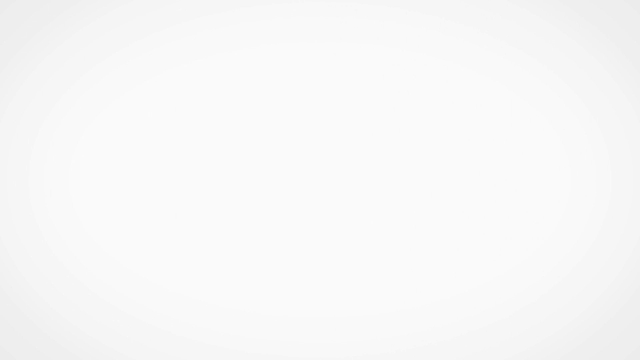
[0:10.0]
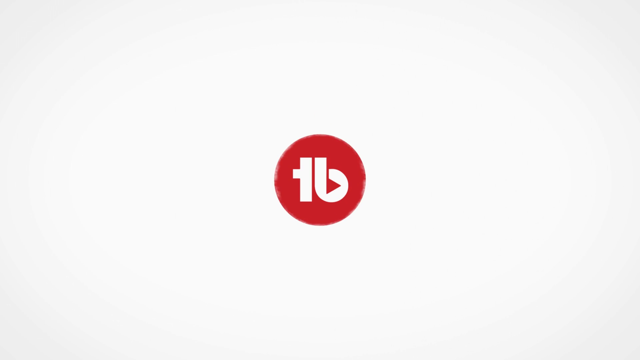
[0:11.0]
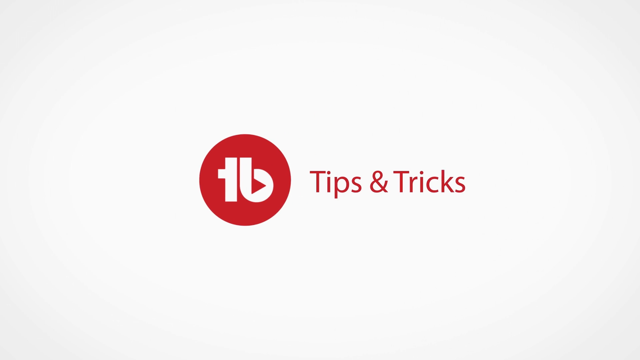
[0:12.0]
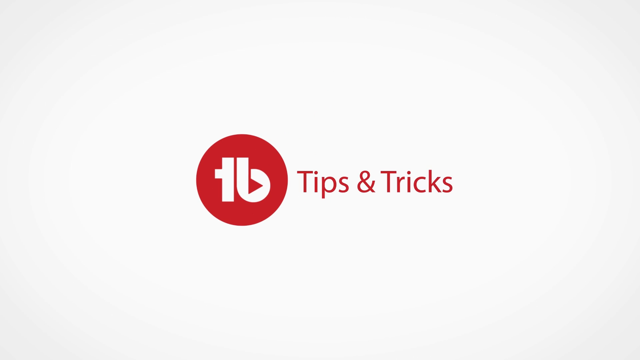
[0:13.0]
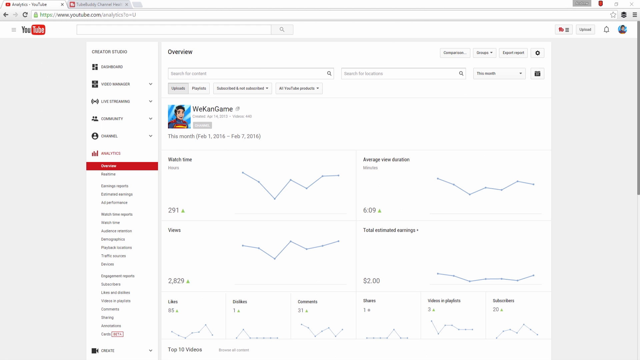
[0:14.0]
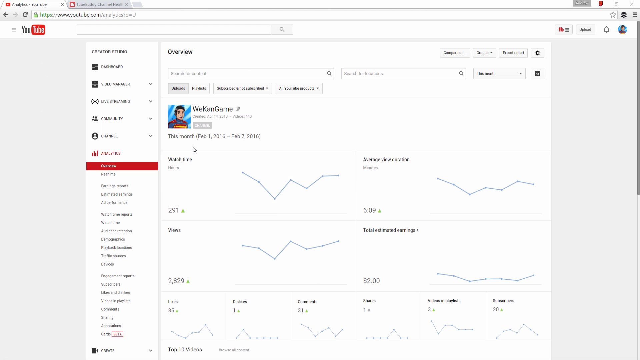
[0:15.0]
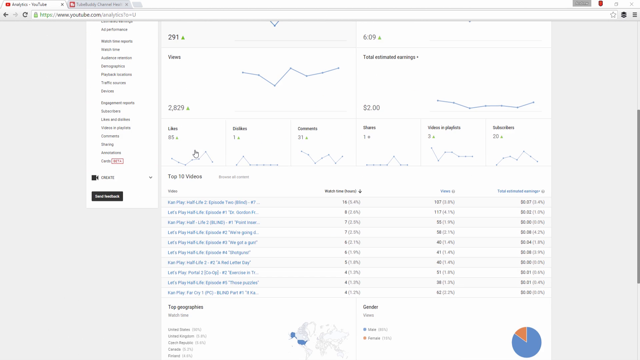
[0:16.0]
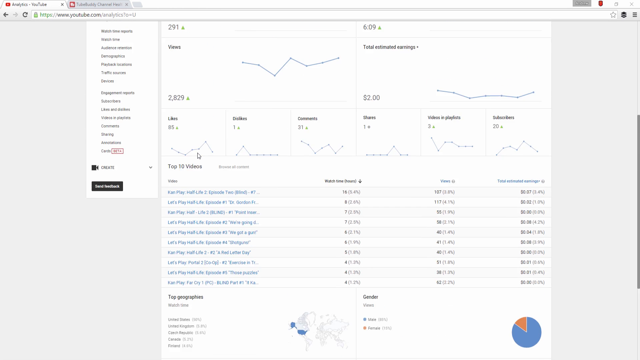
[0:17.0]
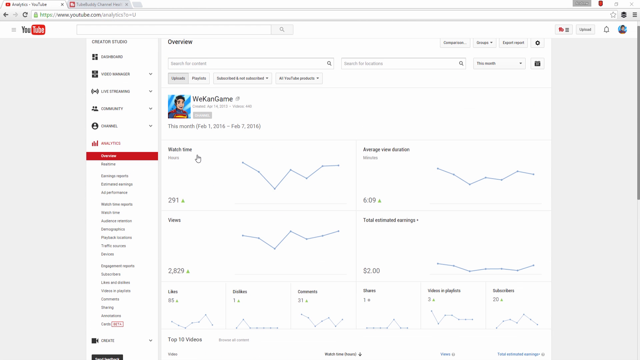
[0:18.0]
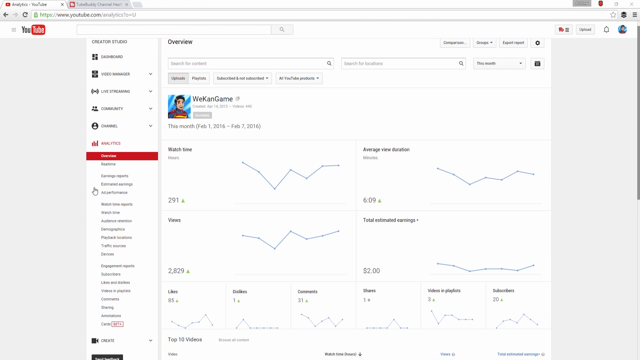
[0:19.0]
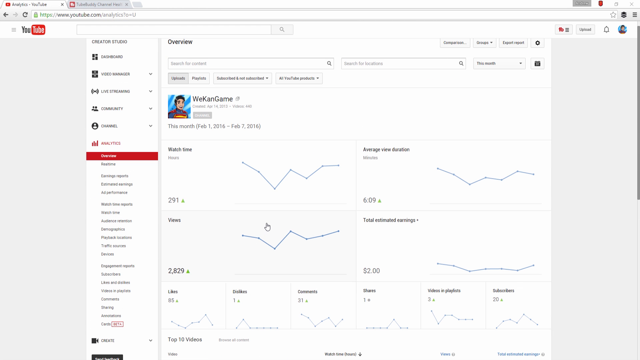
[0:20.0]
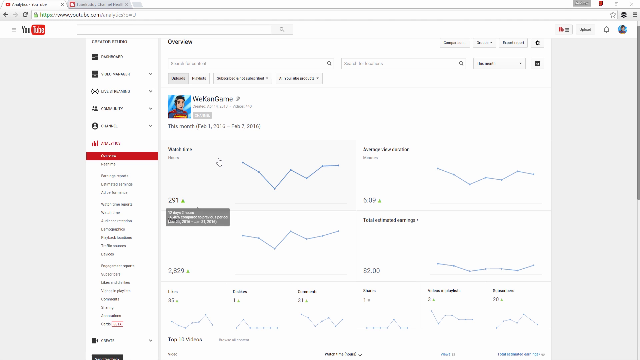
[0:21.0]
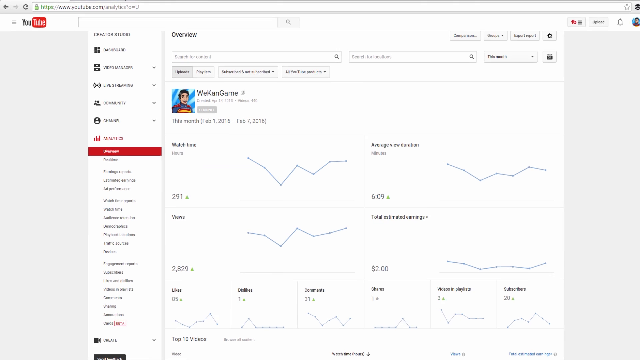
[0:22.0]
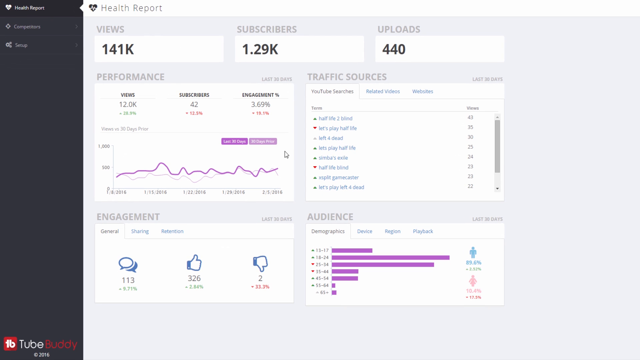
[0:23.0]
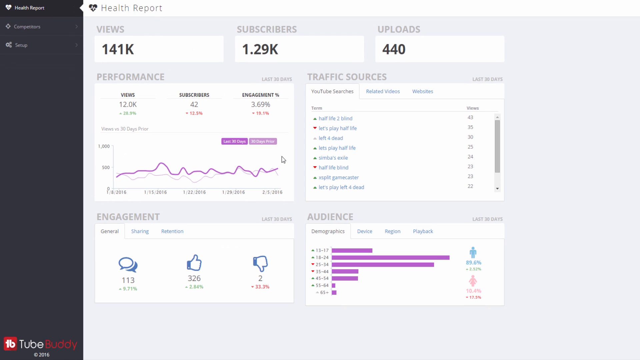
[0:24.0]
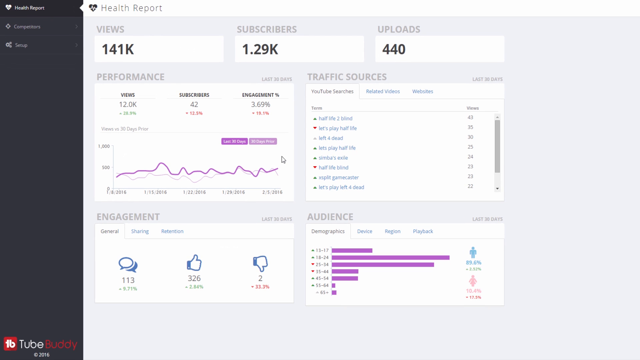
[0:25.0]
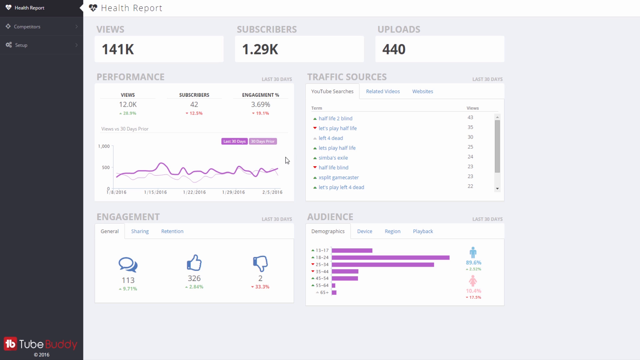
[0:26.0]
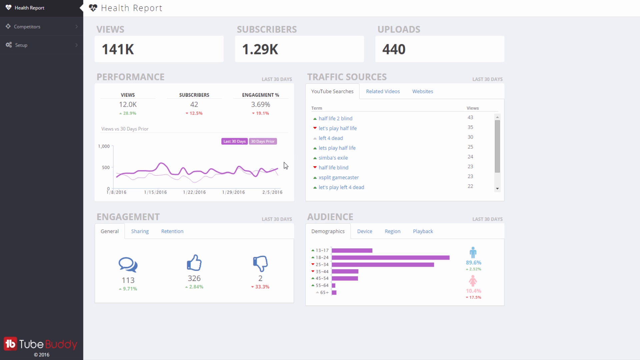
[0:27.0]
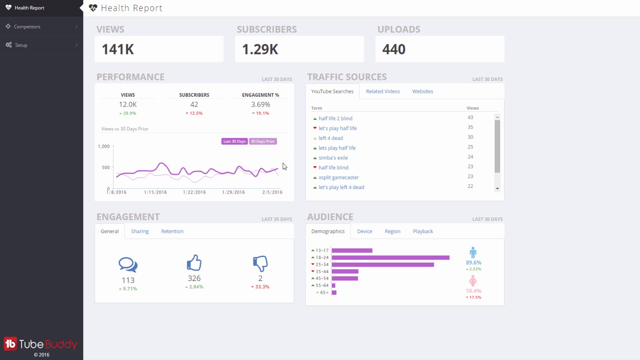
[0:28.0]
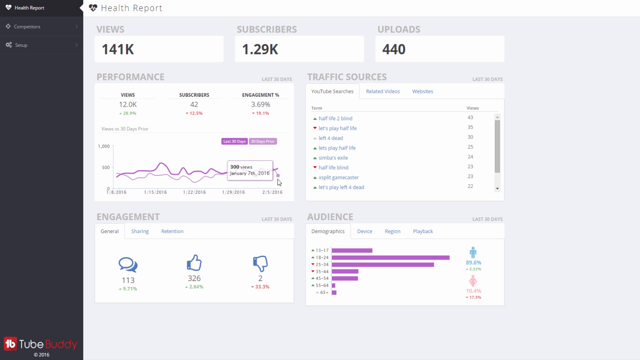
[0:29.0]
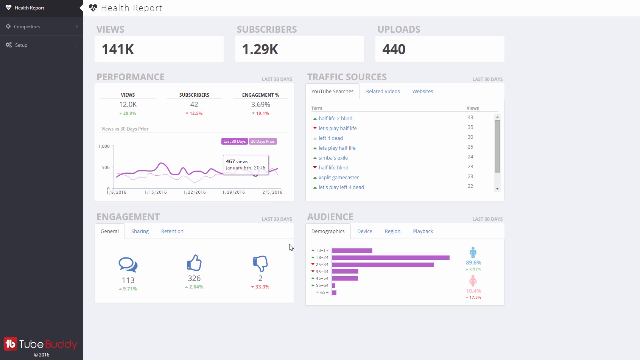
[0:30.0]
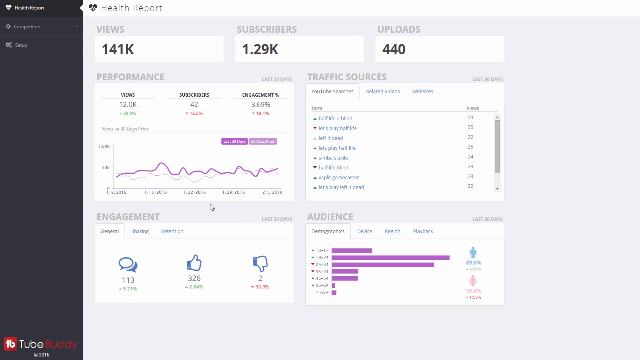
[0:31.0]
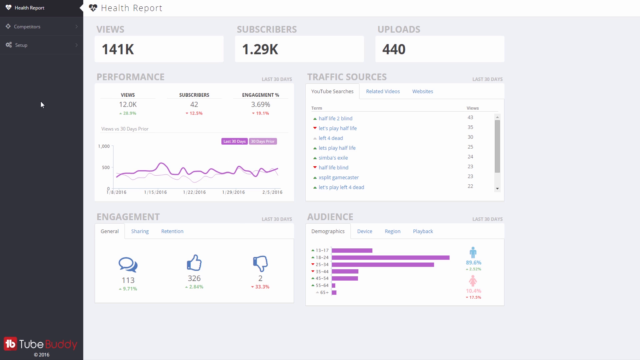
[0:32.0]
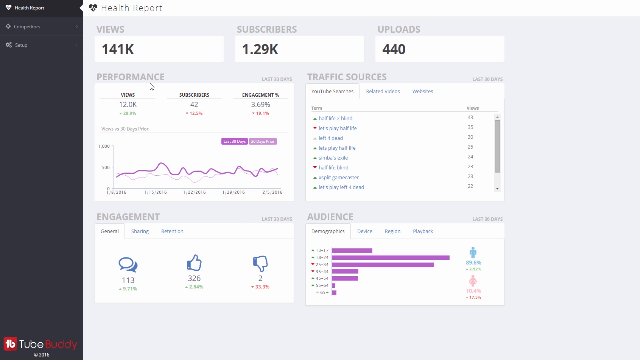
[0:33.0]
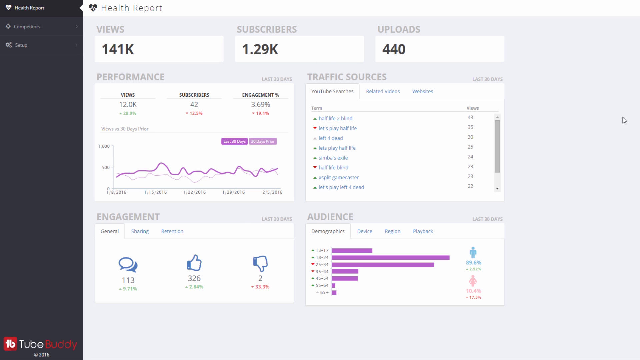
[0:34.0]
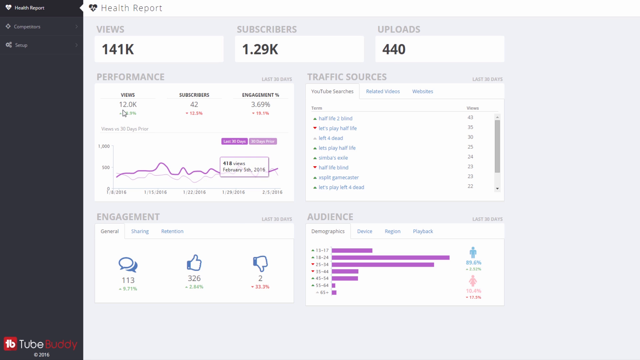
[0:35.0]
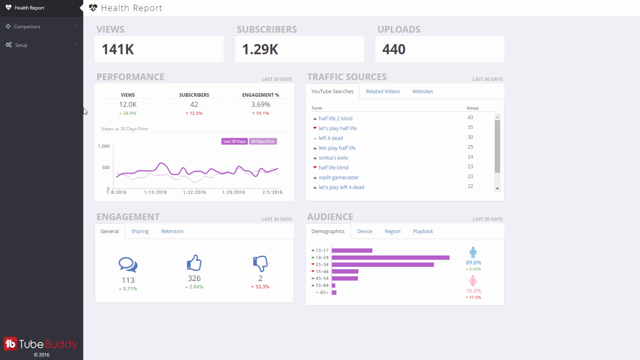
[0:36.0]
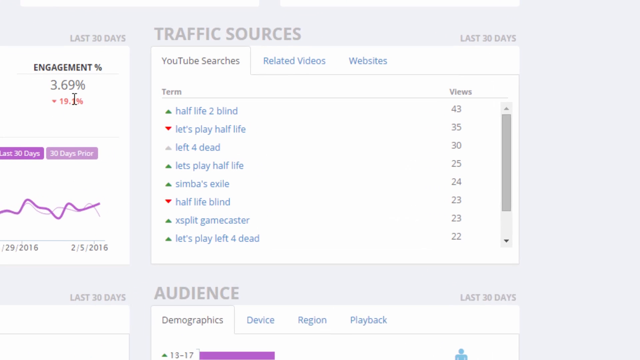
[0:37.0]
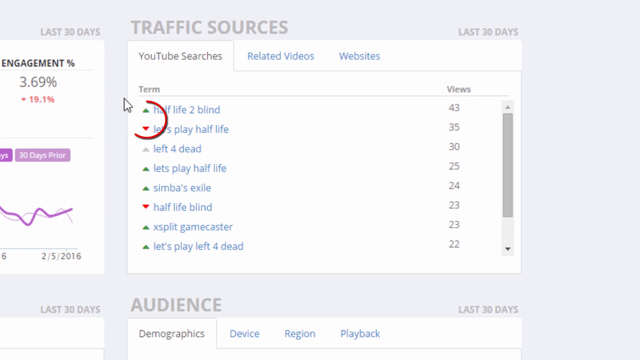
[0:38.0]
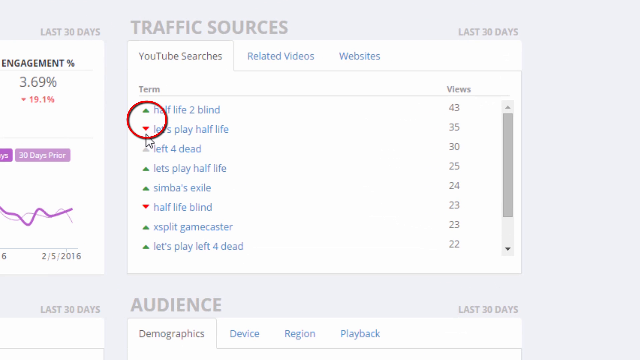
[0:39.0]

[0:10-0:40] A red circular logo with two letters inside drops down, and the words "tips and tricks" come out on a white background. The video then cuts to a YouTube page showing the settings and account information of a YouTube account. The person navigates the account; the account name is "WeCanGame" and its picture shows somebody with black hair. On the analytics page, the text reads "watch time", "average view duration", "views" and "total estimated earnings". The person scrolls down the page, then clicks over to another website in another tab that says "health report". The health report shows 141,000 views, 1.29 thousand subscribers and 440 uploads, with sections for performance, traffic sources, audience and engagement, the last showing the specifics of comments, likes and dislikes.